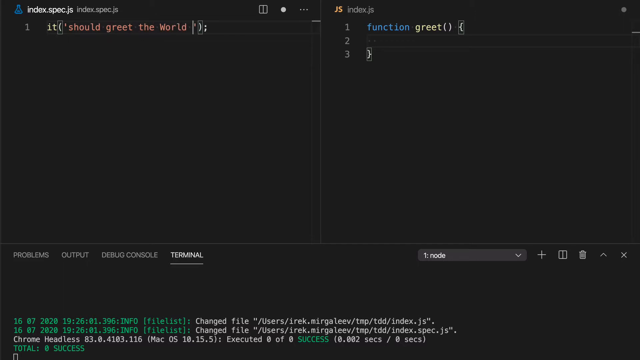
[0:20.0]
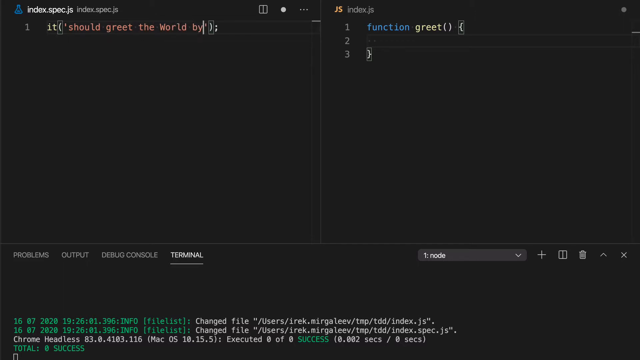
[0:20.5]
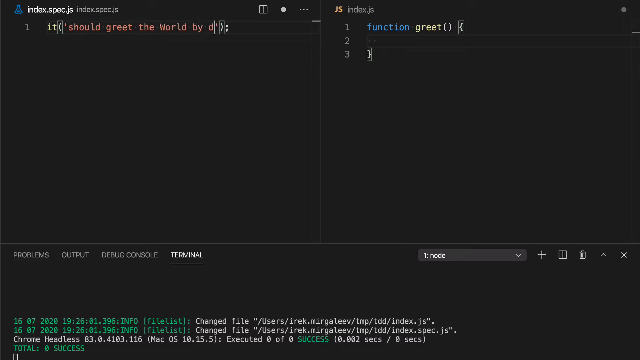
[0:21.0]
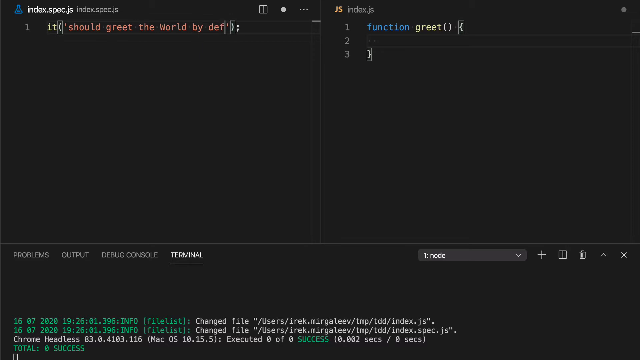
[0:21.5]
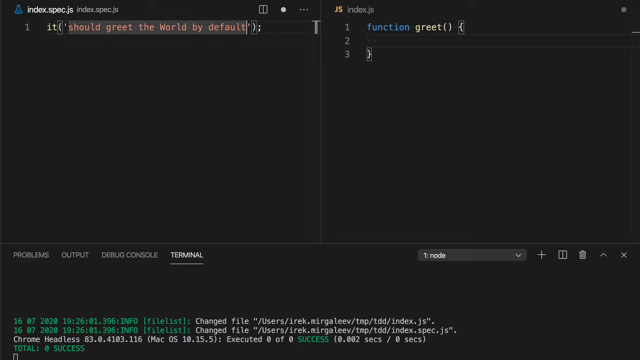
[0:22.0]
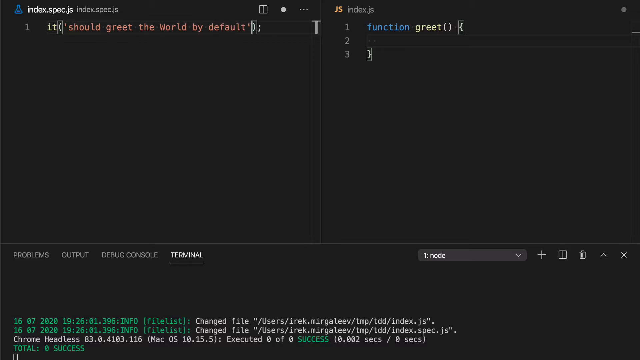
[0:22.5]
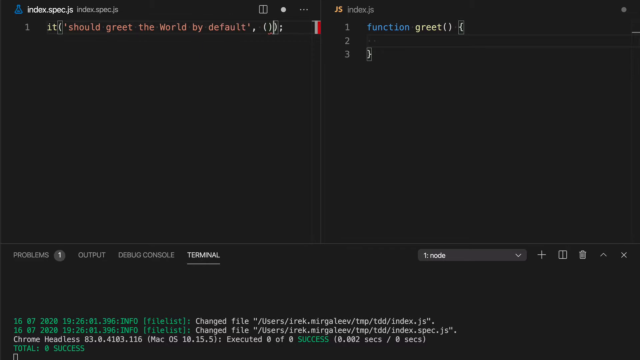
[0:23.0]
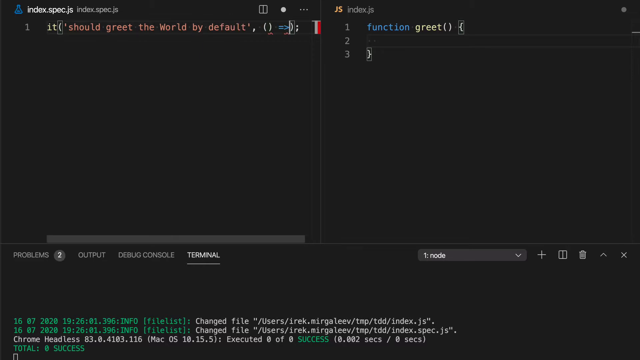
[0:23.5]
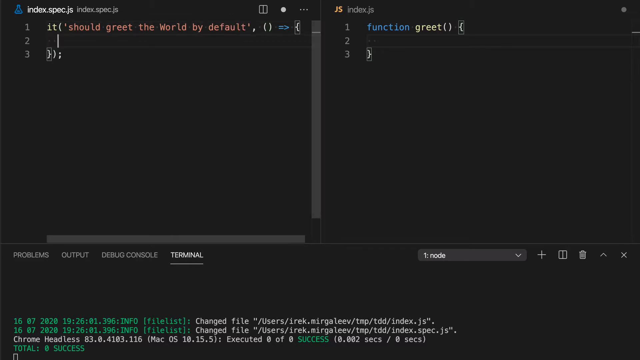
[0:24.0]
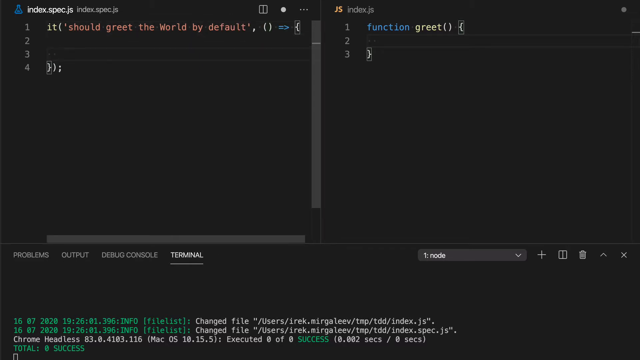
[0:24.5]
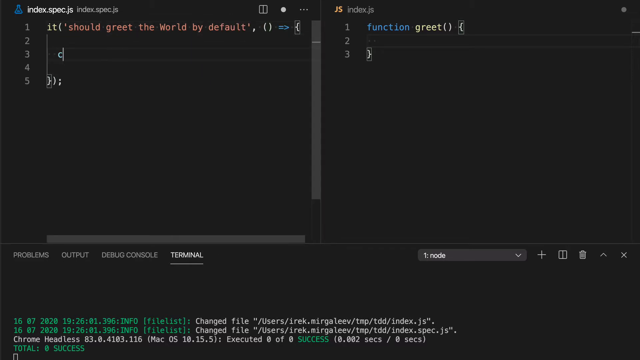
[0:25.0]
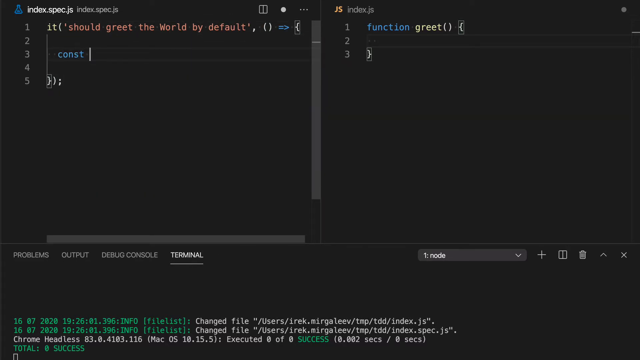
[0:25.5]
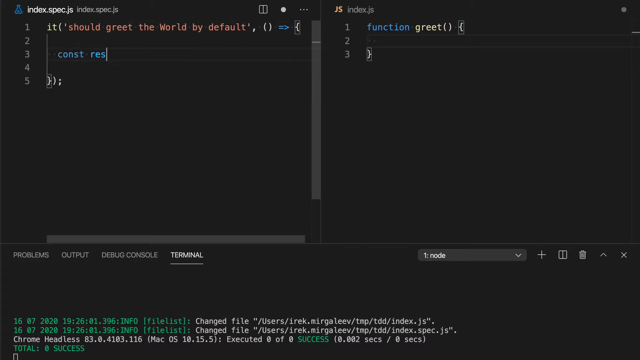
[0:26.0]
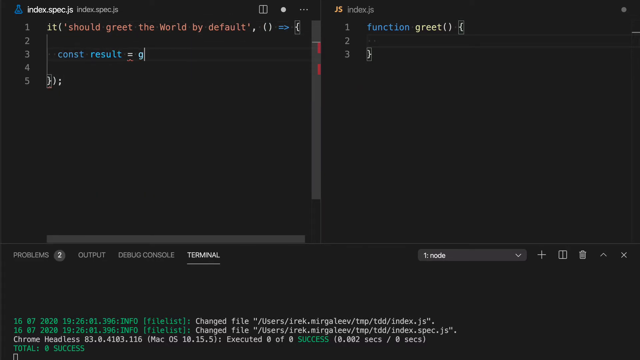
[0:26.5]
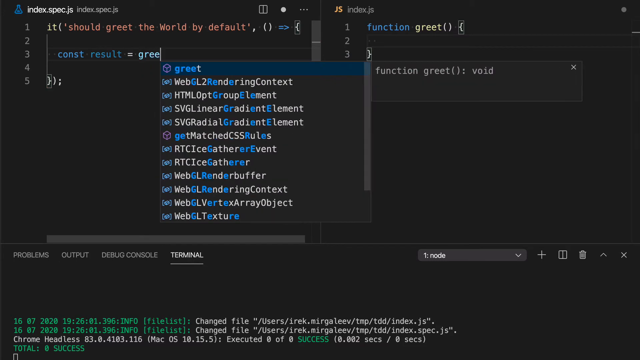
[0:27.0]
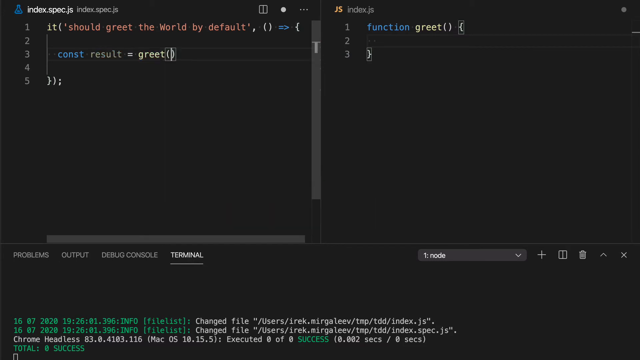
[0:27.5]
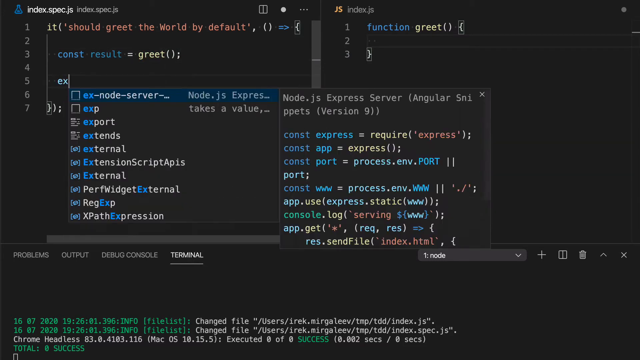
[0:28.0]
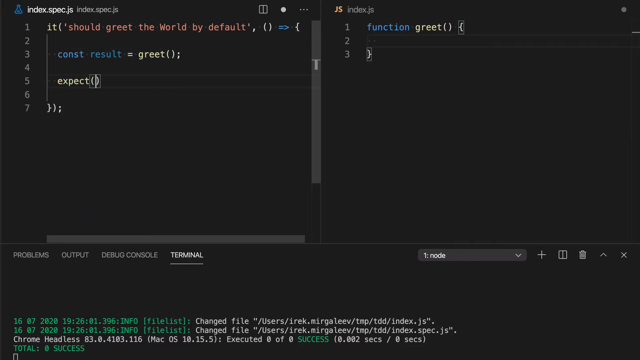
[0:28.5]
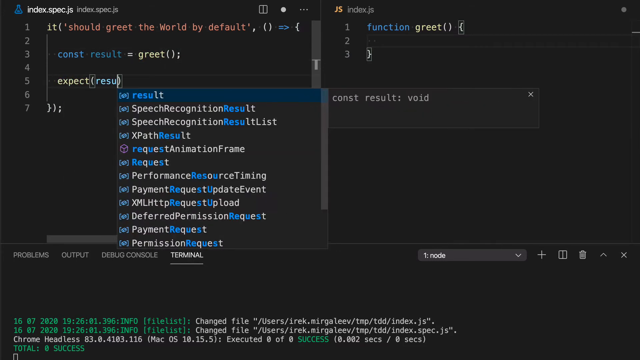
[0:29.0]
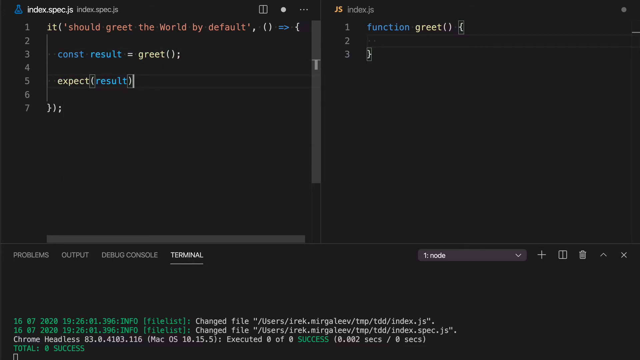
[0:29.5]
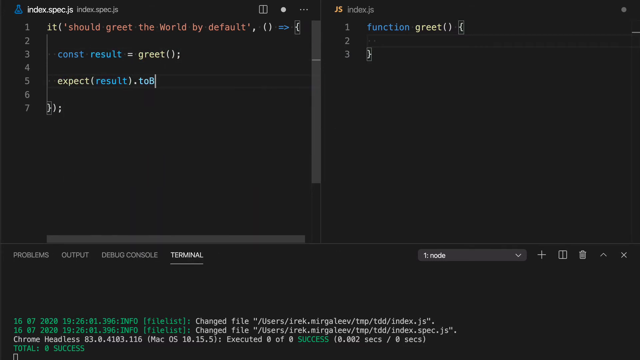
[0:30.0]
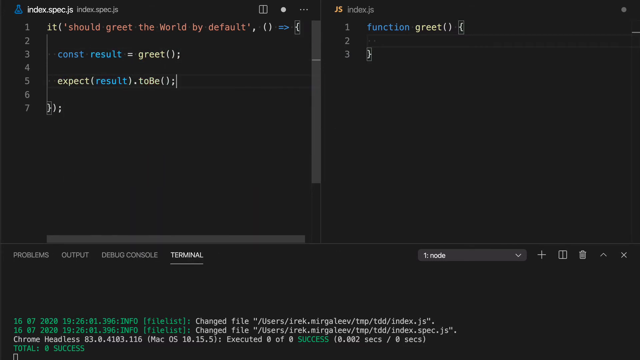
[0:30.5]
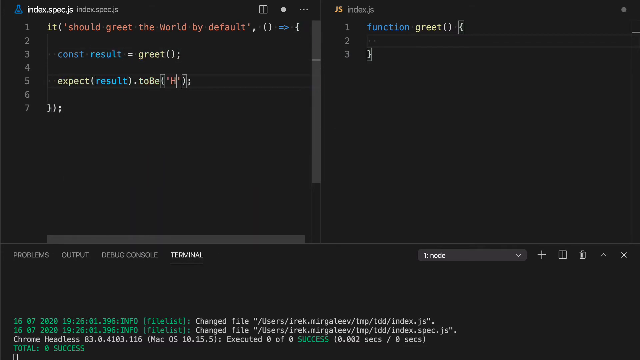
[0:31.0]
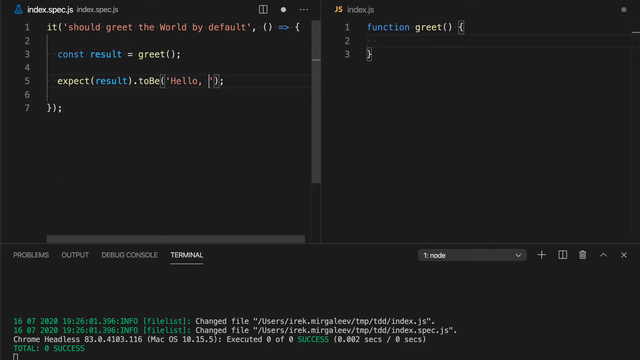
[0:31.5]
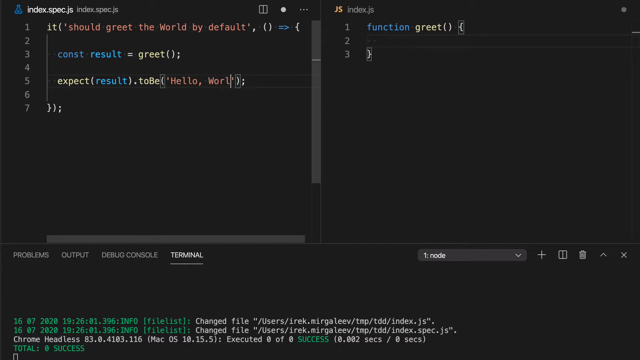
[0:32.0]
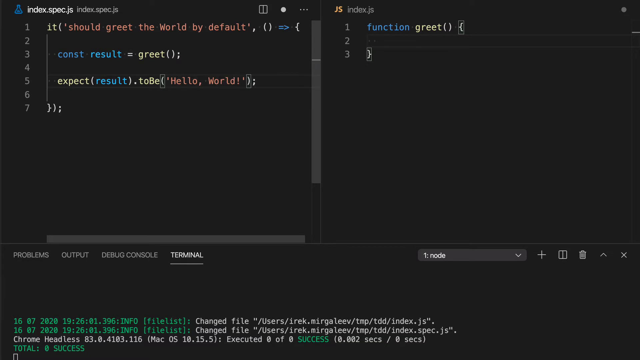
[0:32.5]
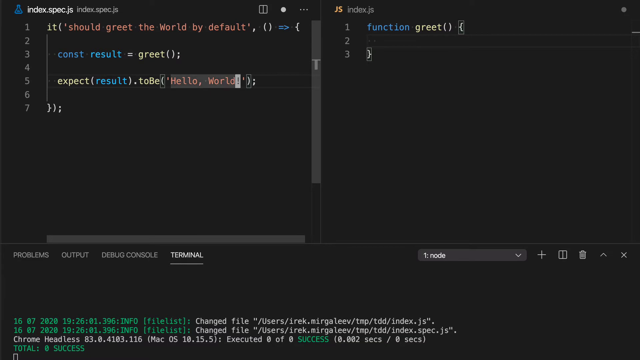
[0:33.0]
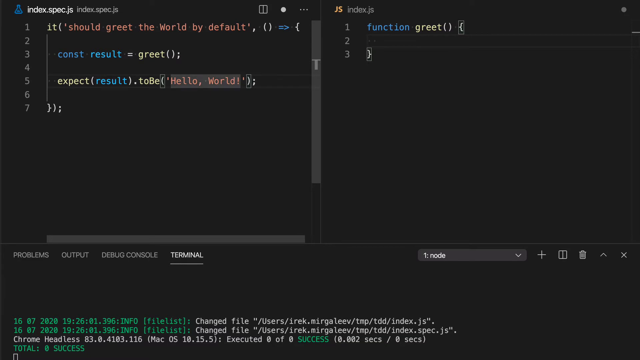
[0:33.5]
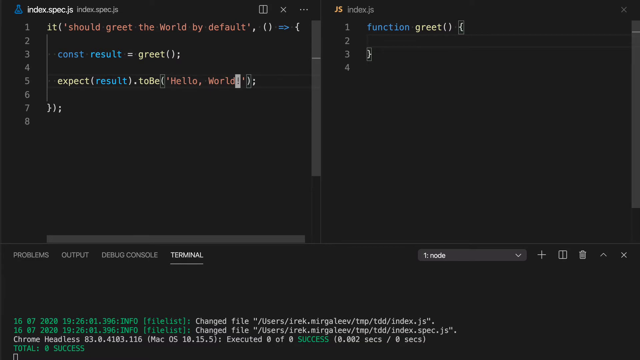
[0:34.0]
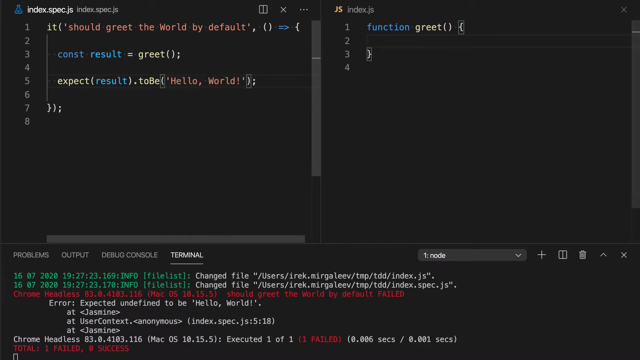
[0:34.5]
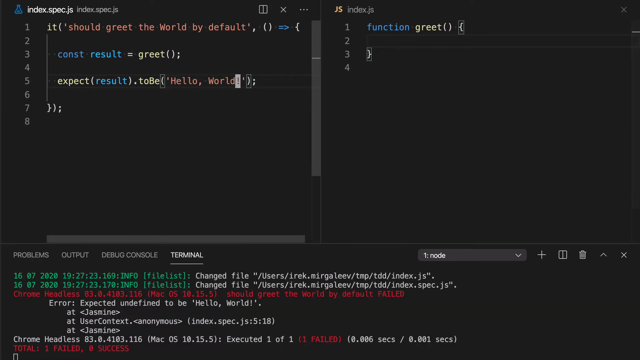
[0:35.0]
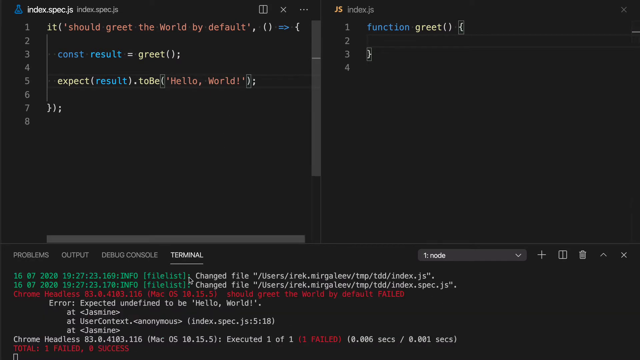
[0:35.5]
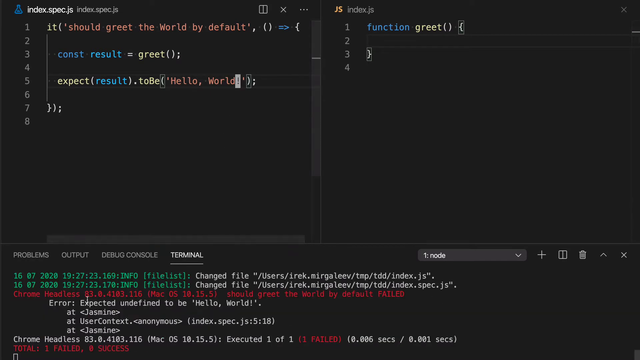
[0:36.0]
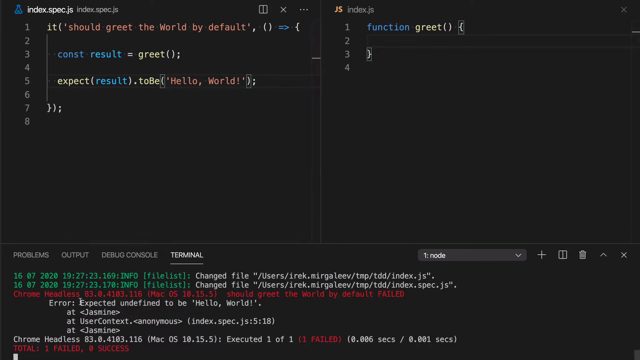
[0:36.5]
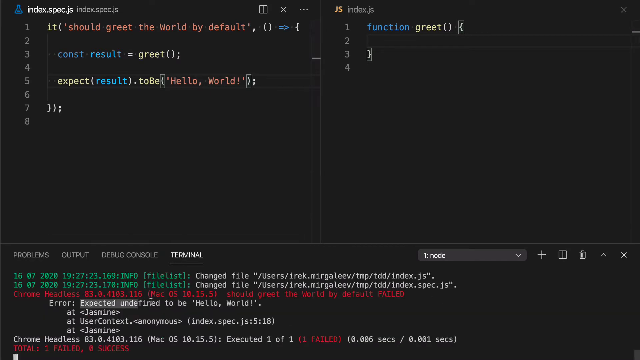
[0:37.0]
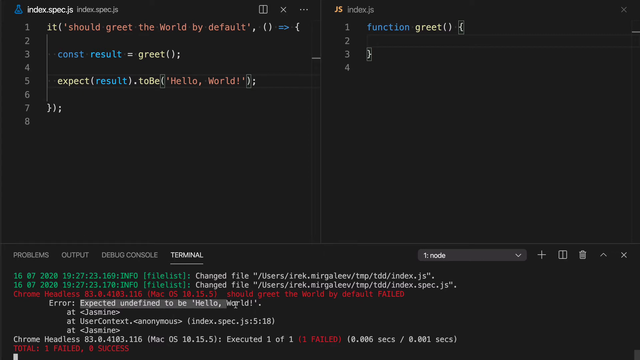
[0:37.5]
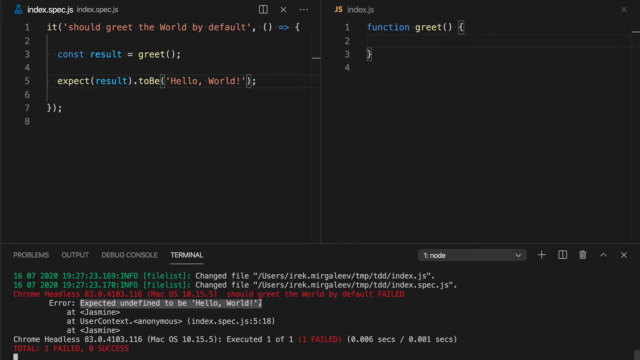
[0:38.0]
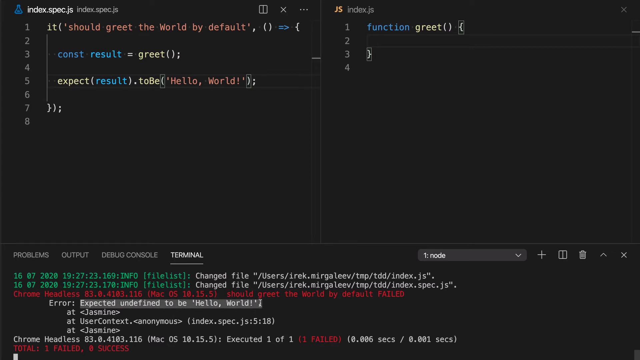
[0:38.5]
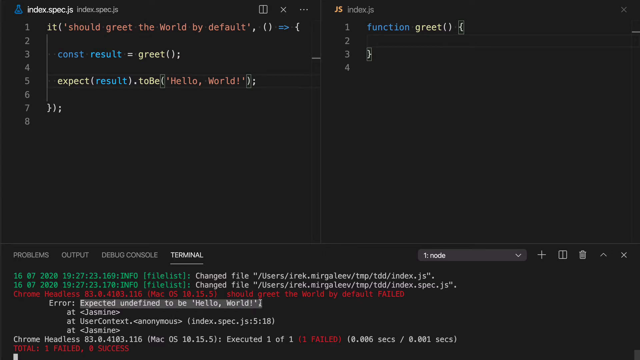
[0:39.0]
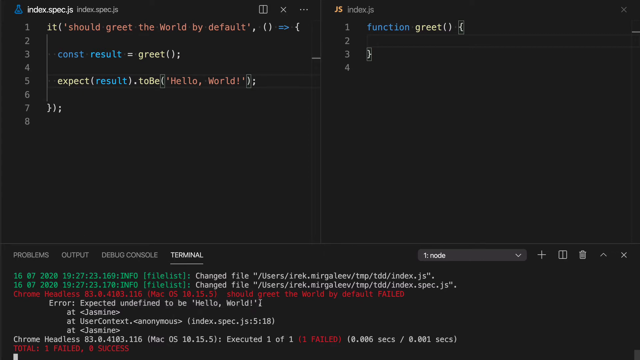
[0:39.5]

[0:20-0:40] The programming screen continues, showing "should greet the world" and "function greet", with "problems", "output" and "debug" labels and "terminal" underlined. The person finishes typing "should greet the world by default", followed by "result equal greet" and "hello world". There are many lines with numbers, along with "change files", indexes and nodes. The screen is mostly black, with writing in red, blue, yellow, a few greens and white lettering, plus parentheses, periods and other symbols. The labels "problems", "output", "debug", "console", "terminal", "index", "specs", "function" and "greet" remain visible.